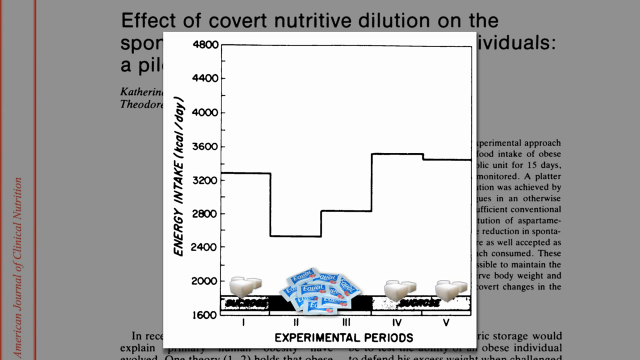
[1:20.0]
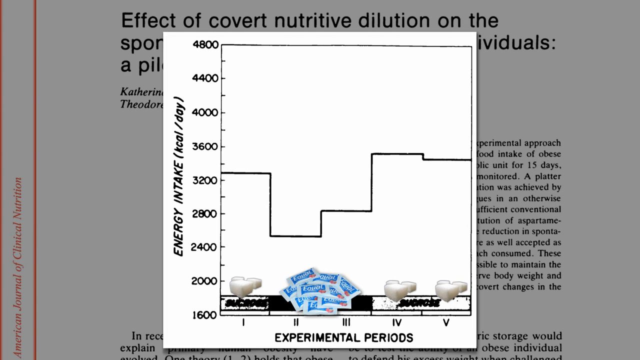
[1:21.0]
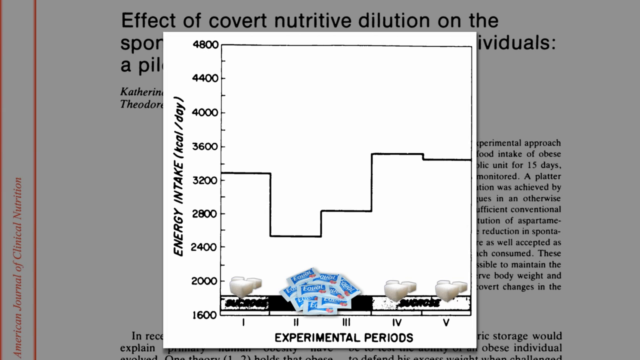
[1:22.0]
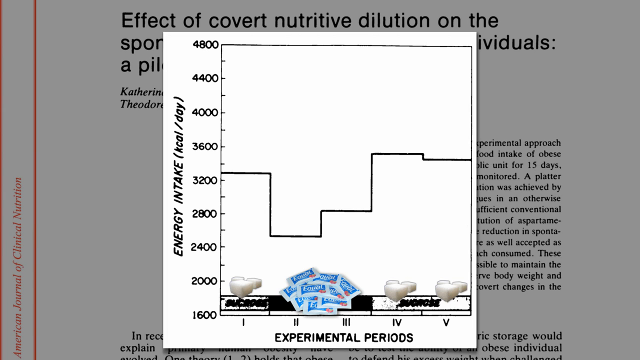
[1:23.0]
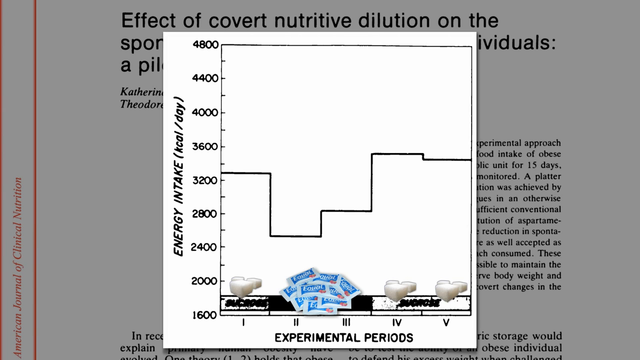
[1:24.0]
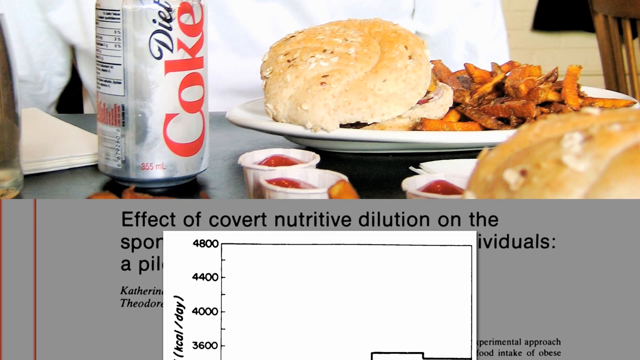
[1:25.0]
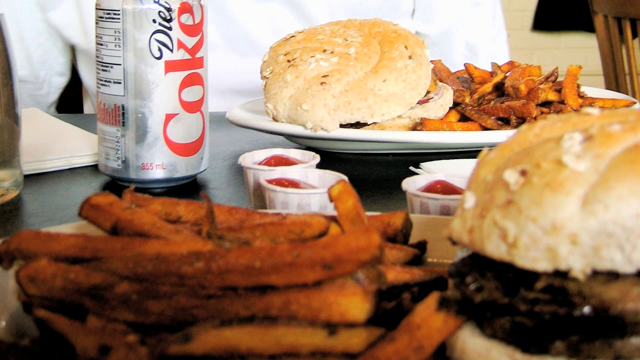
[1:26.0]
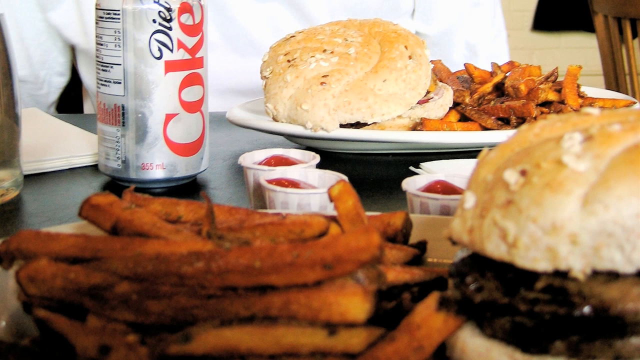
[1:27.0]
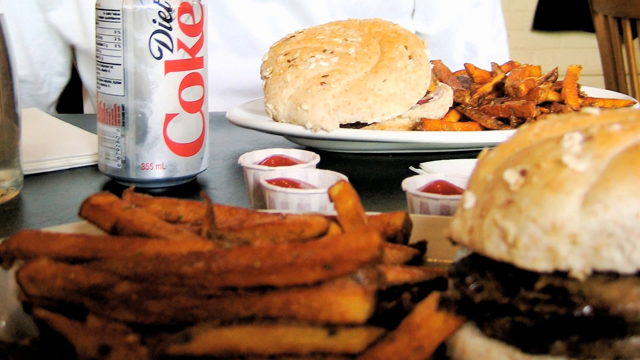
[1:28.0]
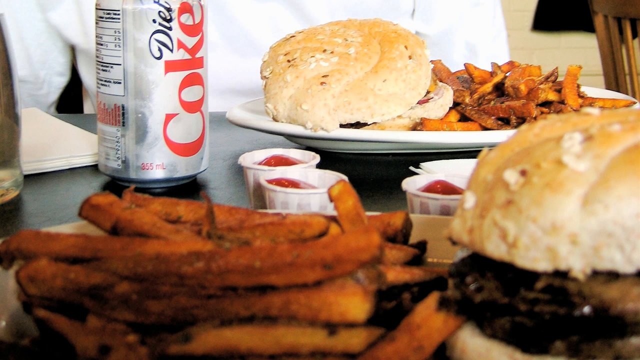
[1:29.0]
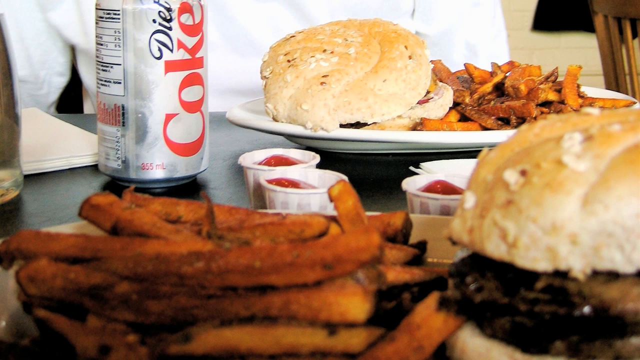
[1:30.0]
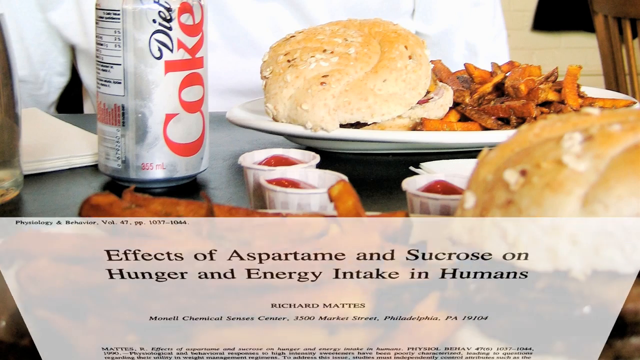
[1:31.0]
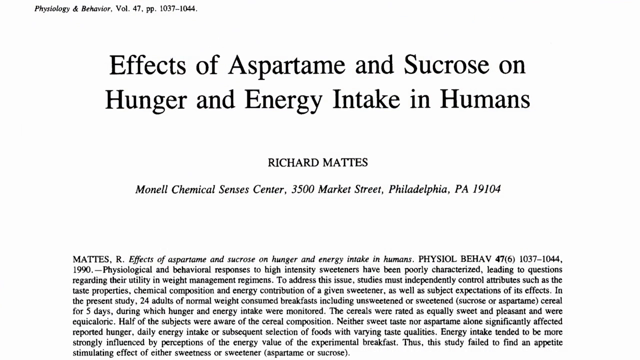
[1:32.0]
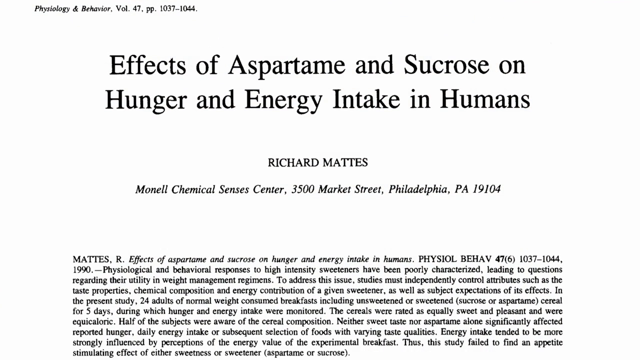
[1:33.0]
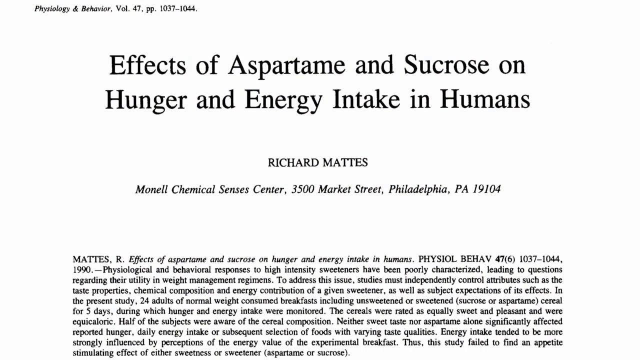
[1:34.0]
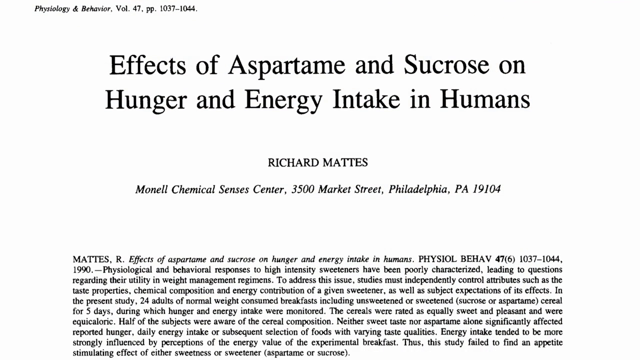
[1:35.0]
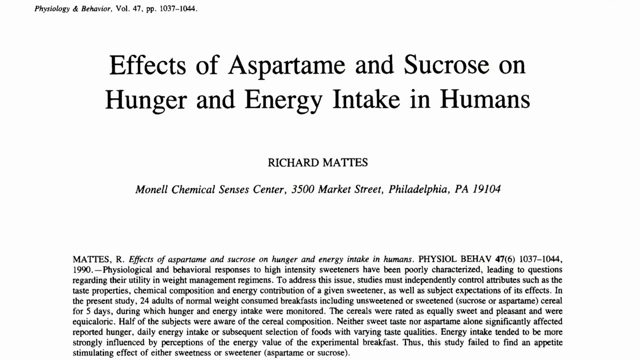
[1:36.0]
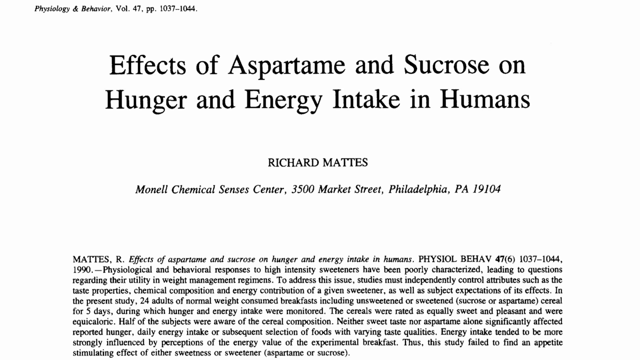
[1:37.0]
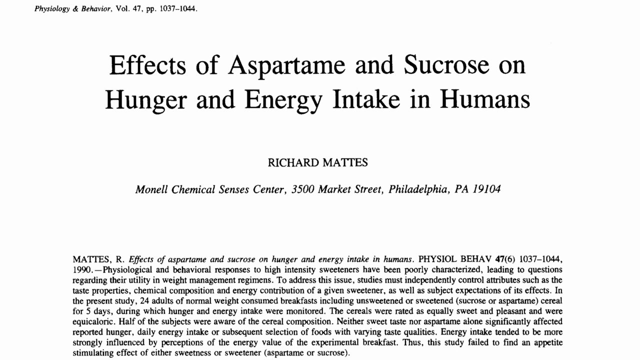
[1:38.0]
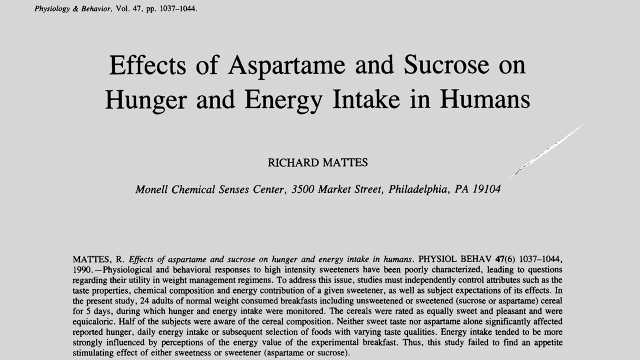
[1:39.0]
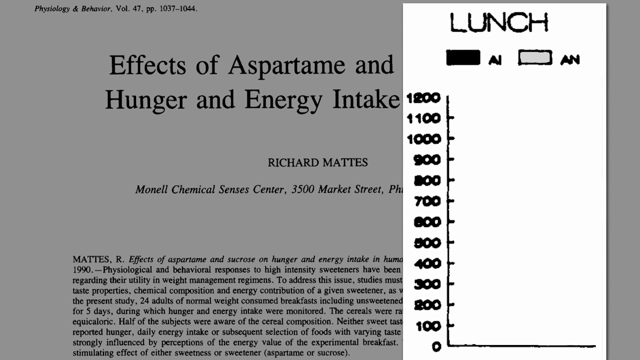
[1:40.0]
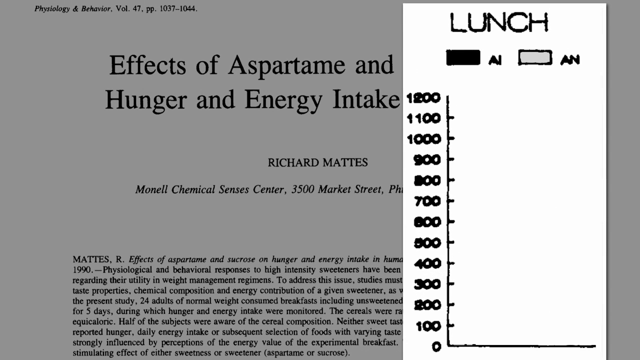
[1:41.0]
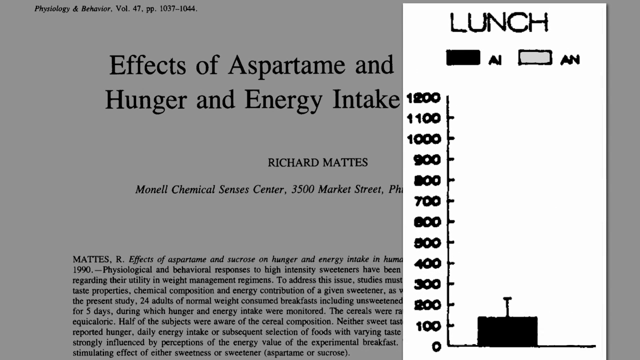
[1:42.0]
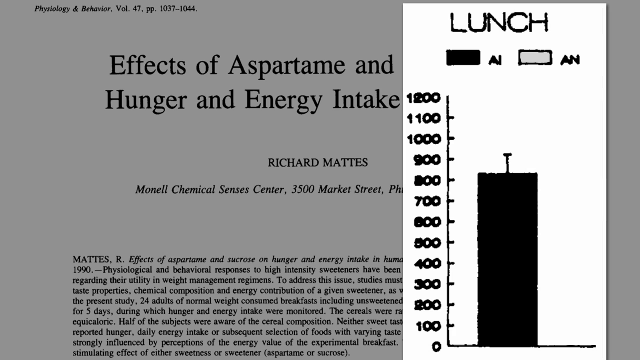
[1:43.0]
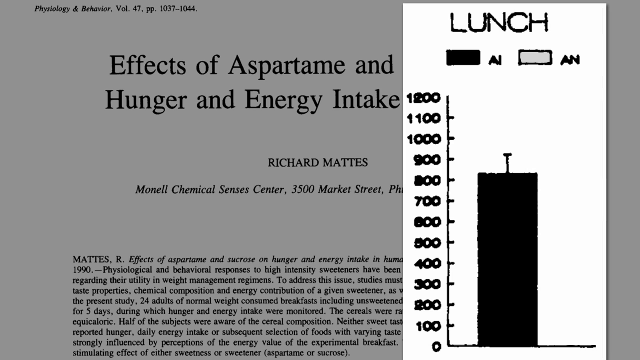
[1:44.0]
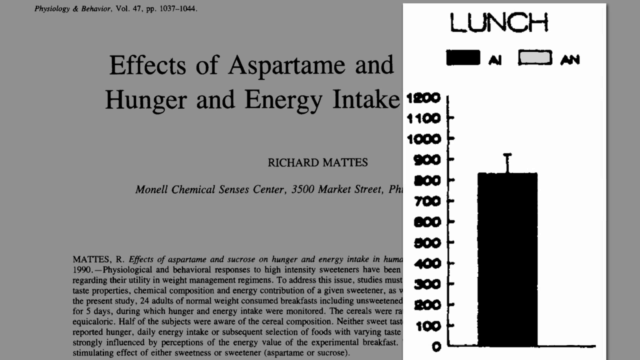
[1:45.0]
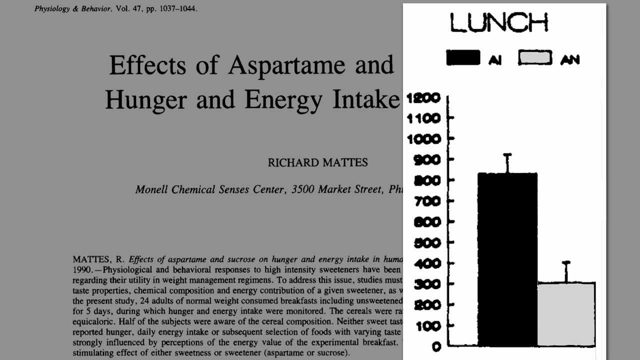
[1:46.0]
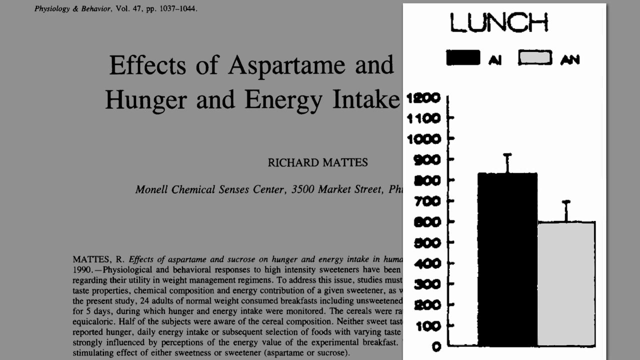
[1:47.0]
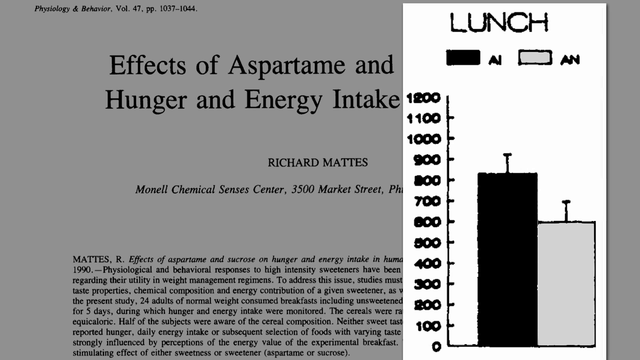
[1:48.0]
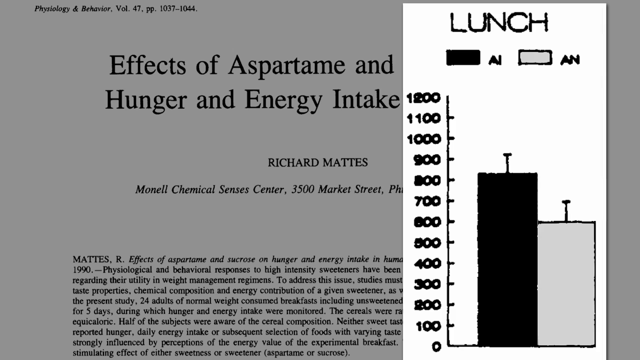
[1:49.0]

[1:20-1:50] The graph remains on screen. It shows that obese people who were given artificial sweeteners without knowing it increased their energy intake to compensate for the short-term reduction in caloric intake. The scene changes to a photograph of a meal with many fried foods: ketchup, a bun, extra crispy french fries, and a hamburger on a sesame seed bun. In the upper right, a can of Diet Coke is over a black and red can. Another article follows, from the Journal of Physiology and Nutrition, titled "The effects of aspartame and sucrose on hunger and energy intake in humans." It was written by Richard Mattes (M-A-T-T-E-S) of the Monell Chemical Senses Center in Philadelphia. A bar graph of calorie intake at lunch then appears; the first bar is at 800 and the second at 550.